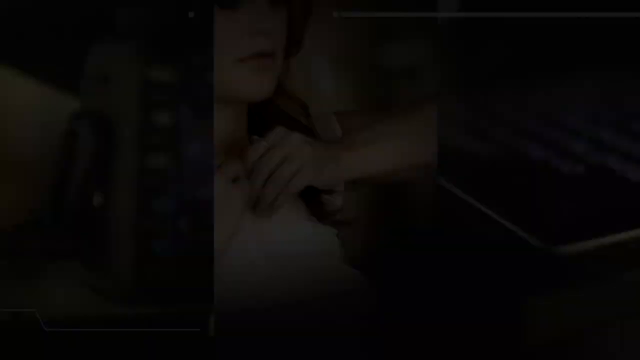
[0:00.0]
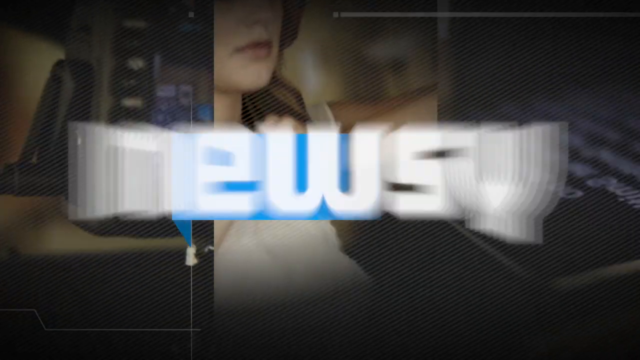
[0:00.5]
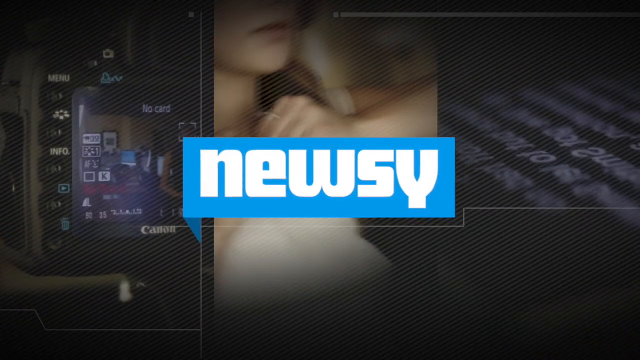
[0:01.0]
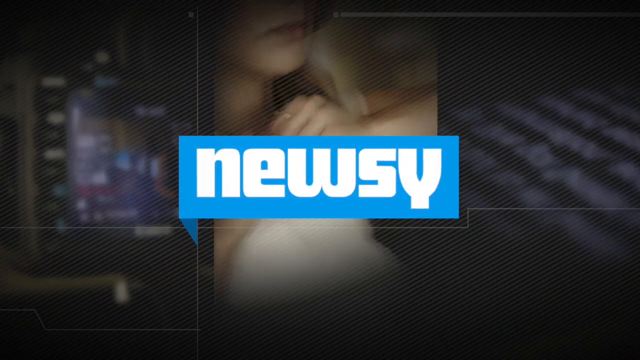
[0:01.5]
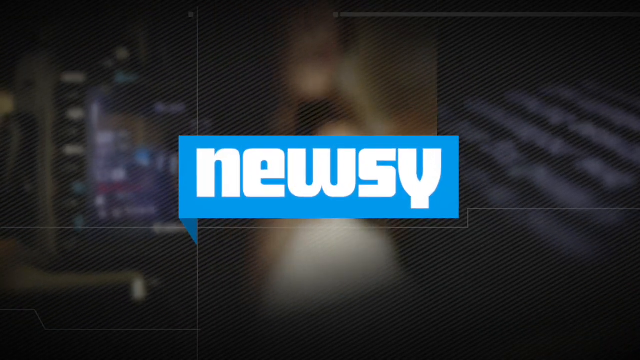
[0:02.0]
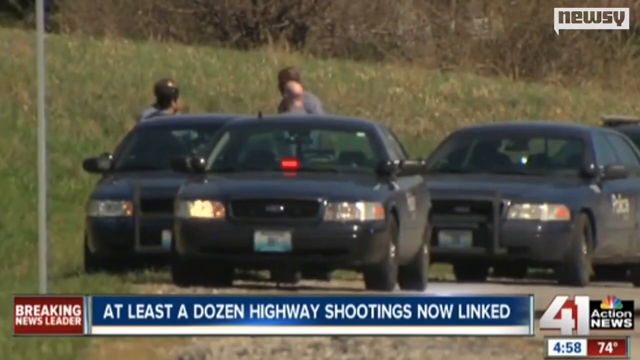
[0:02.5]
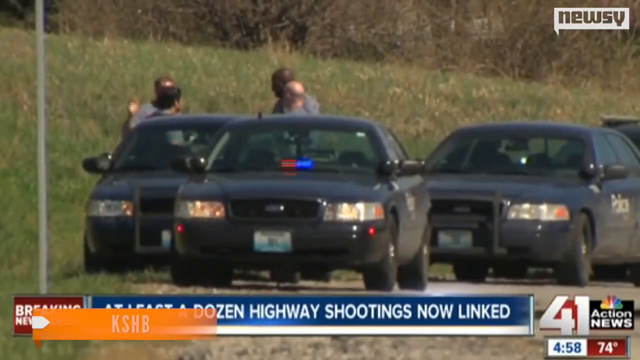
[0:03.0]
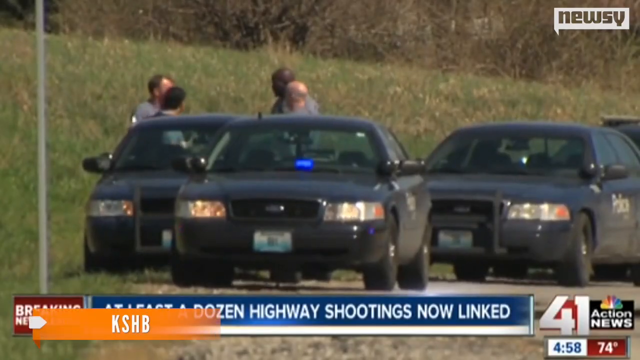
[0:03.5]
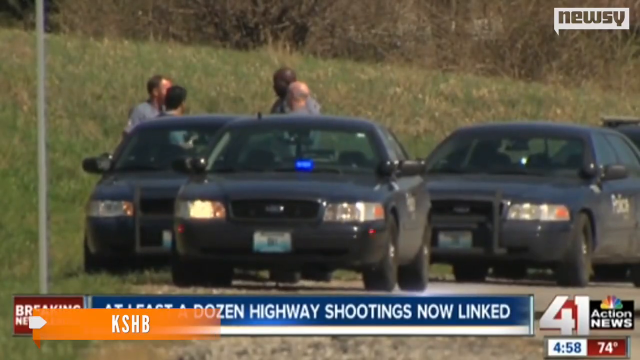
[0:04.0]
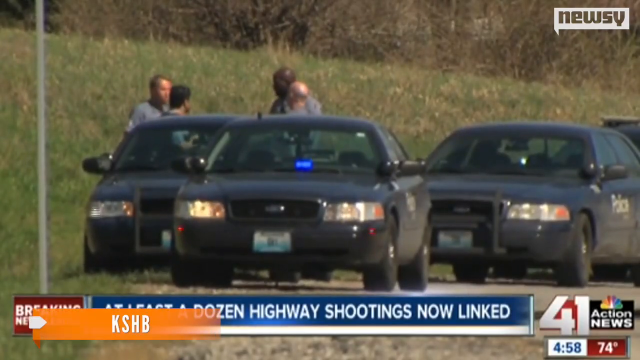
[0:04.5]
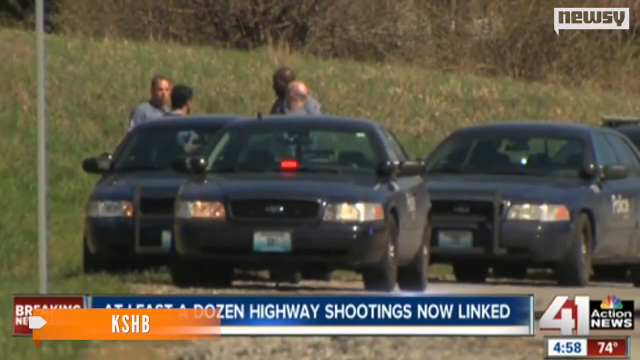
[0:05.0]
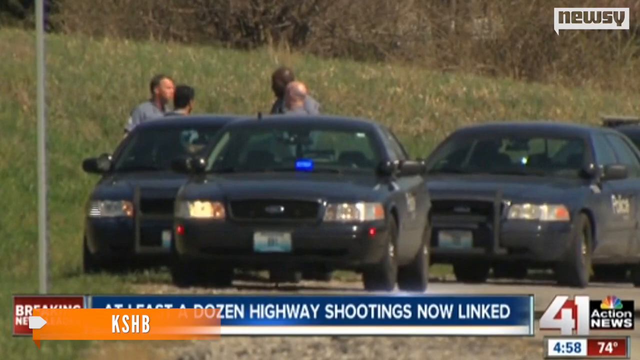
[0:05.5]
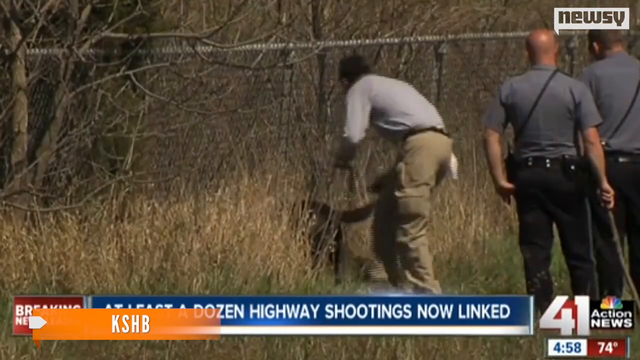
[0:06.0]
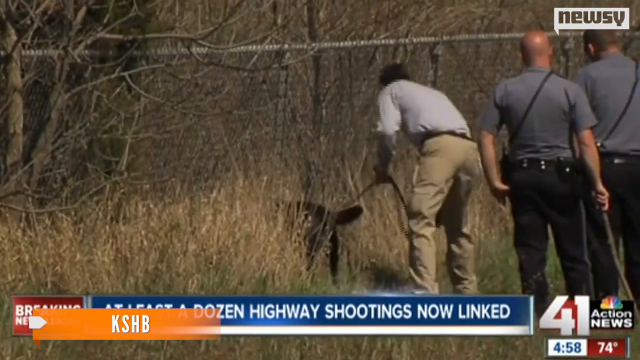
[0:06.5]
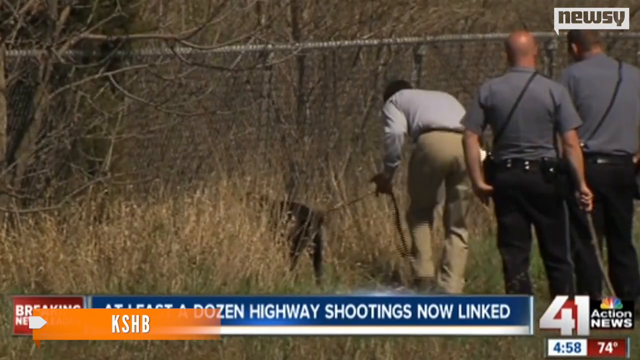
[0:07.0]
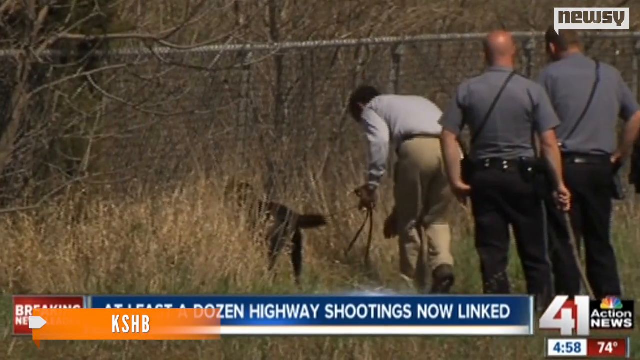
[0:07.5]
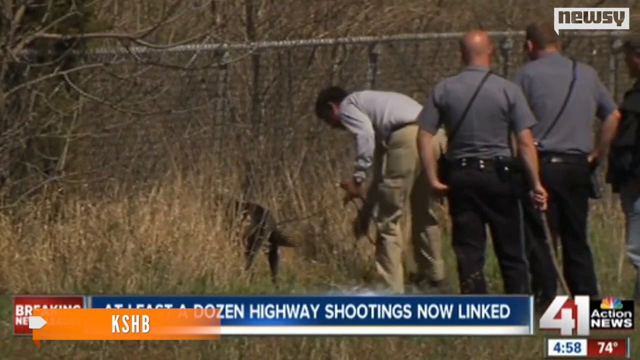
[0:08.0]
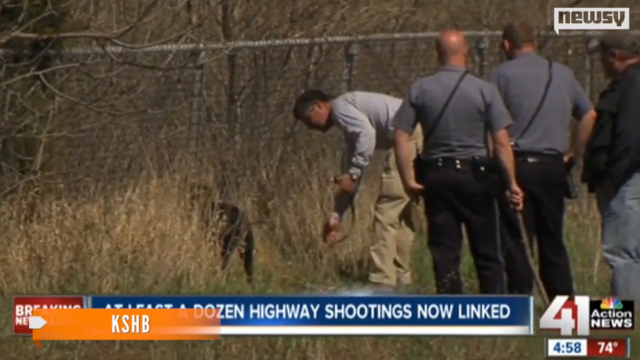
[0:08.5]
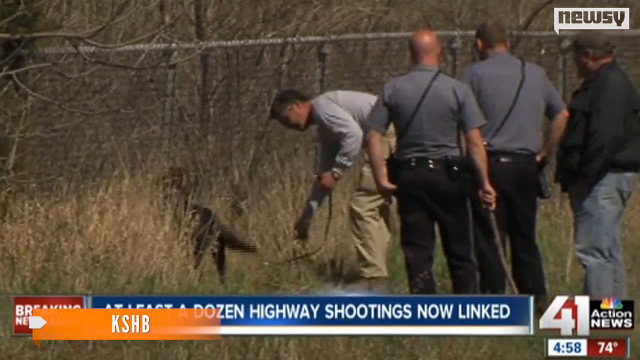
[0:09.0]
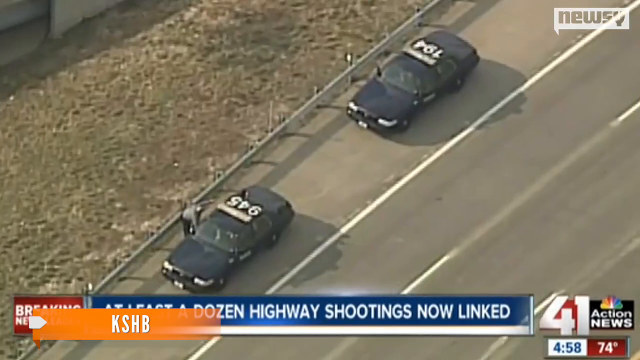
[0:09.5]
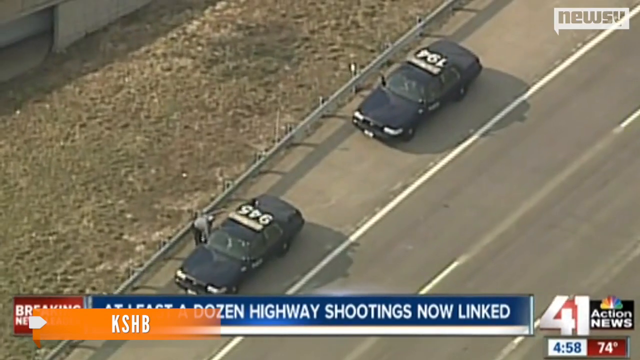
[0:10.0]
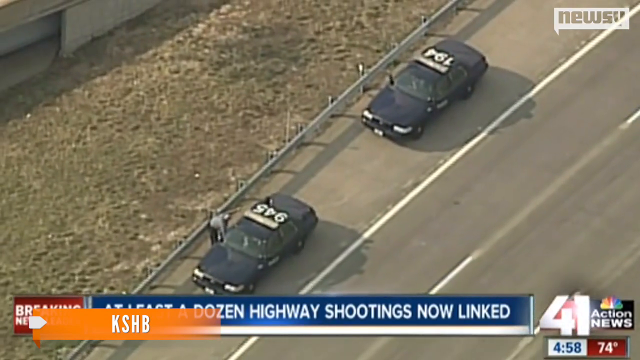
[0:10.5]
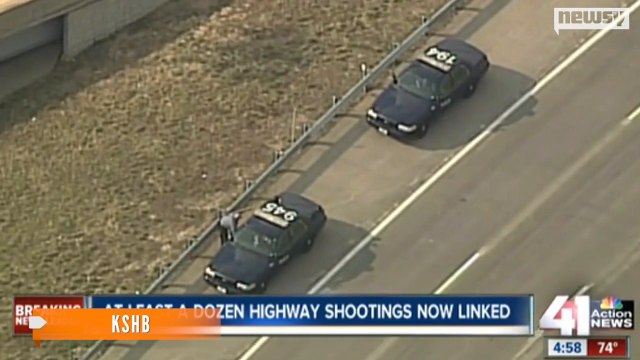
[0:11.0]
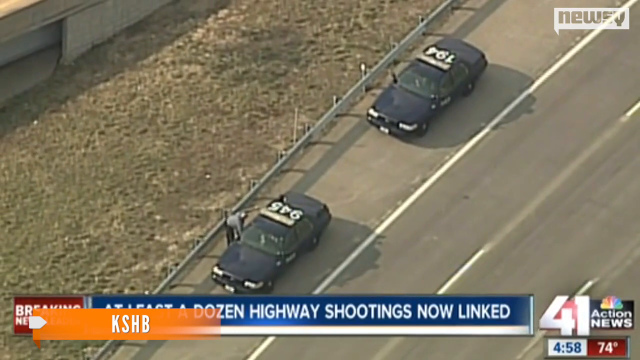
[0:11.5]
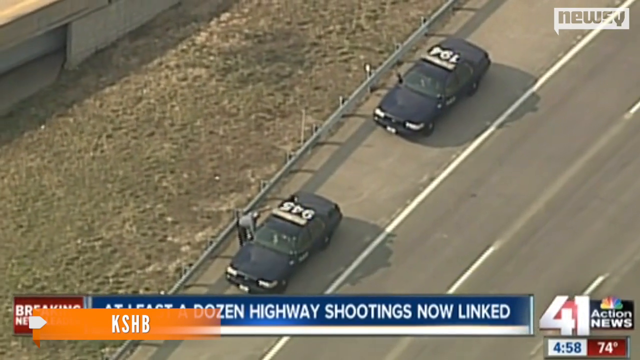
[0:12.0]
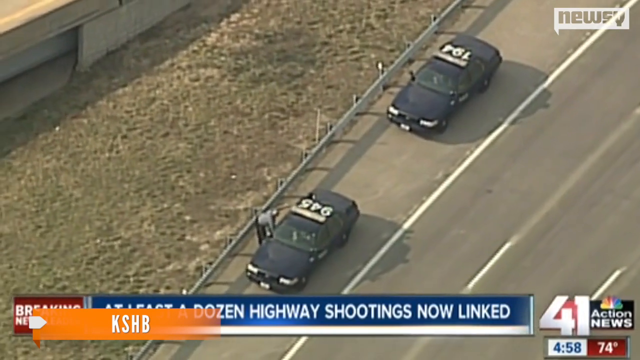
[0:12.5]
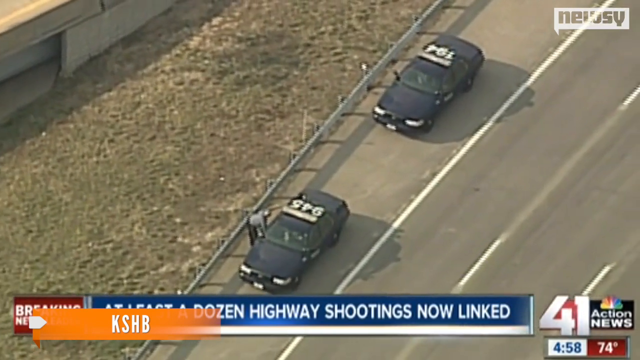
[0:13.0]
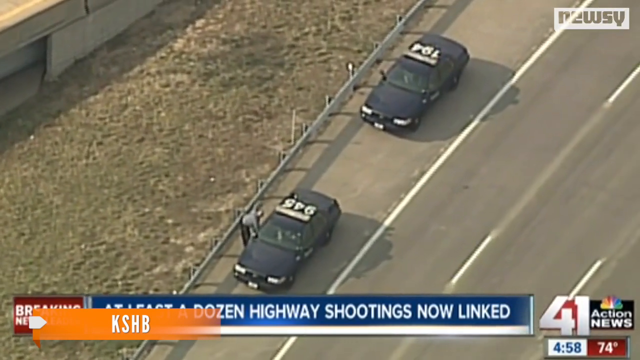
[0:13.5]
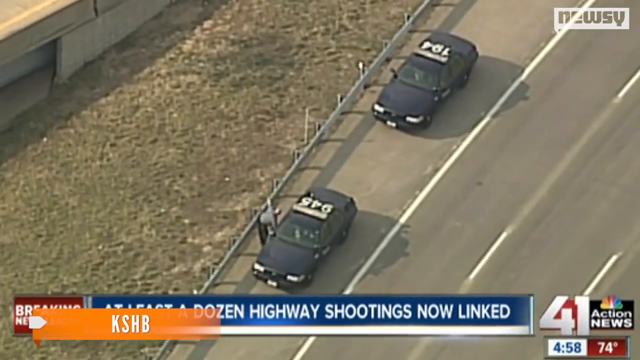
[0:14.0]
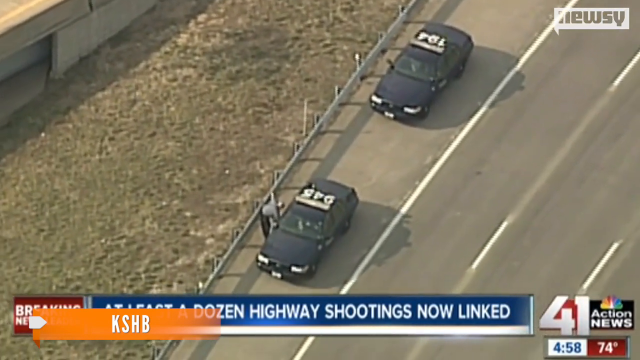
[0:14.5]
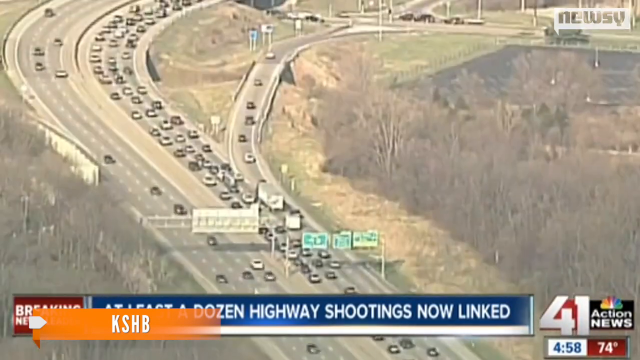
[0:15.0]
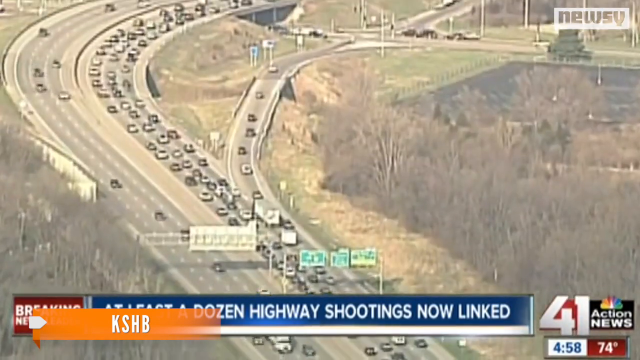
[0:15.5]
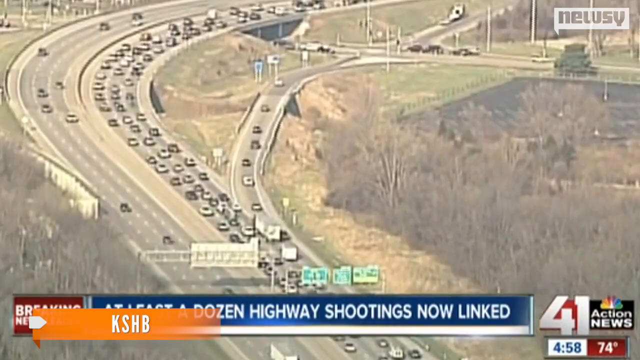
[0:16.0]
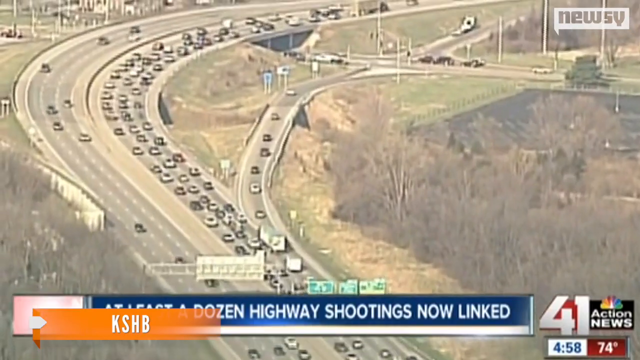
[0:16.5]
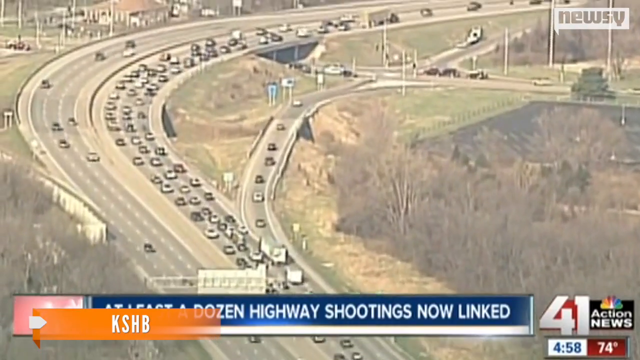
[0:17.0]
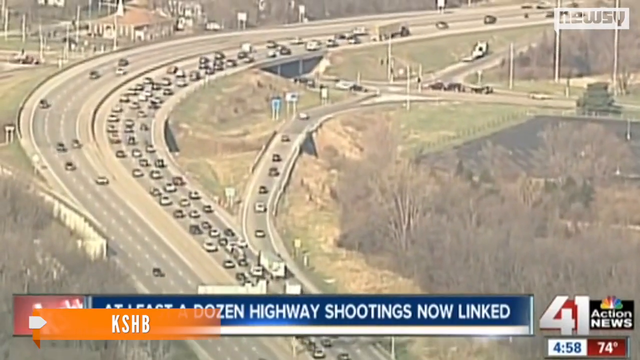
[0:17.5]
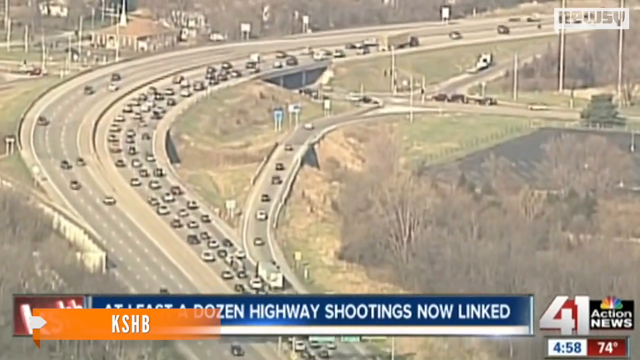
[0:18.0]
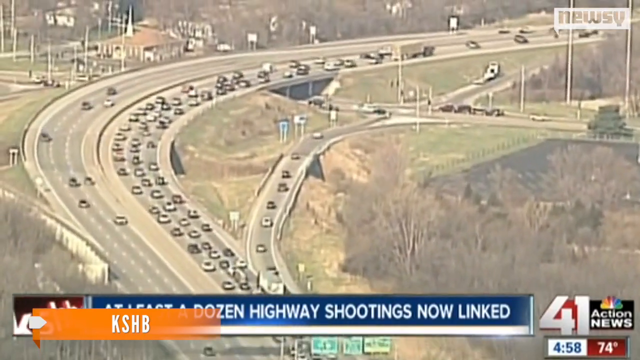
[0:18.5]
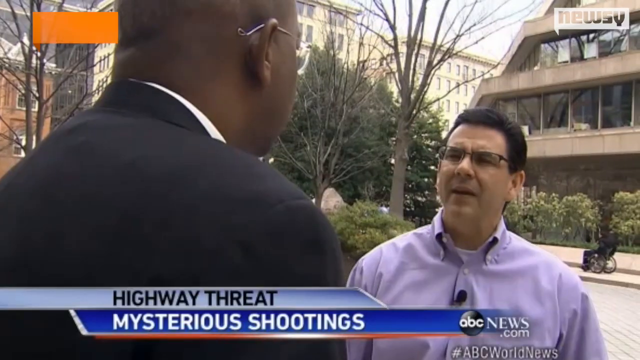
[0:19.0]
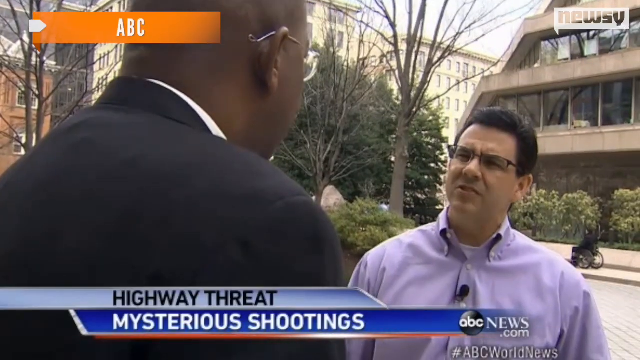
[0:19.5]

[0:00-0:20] A Newsy 41 Action News broadcast opens with an introduction and then the channel's branding. A breaking news headline reads "at least a dozen highway shootings now linked," and a 41 Action News logo is in the bottom right. A police car is on the scene with its siren on, and a few policemen talk at the back of one of the vehicles. Officers patrol and track using sniffing dogs. In another scene, policemen stand next to their cars, which show the numbers 945 and 194, and this scene is shown from an aerial view. Another scene shows a highway.